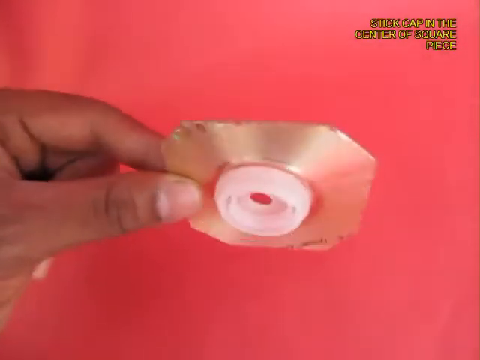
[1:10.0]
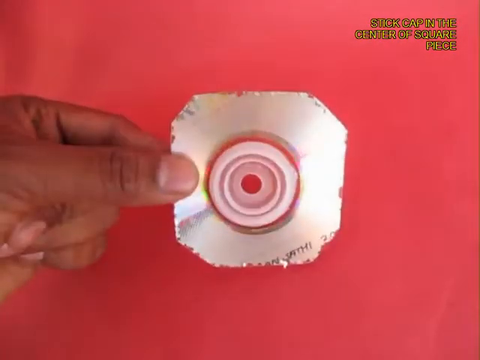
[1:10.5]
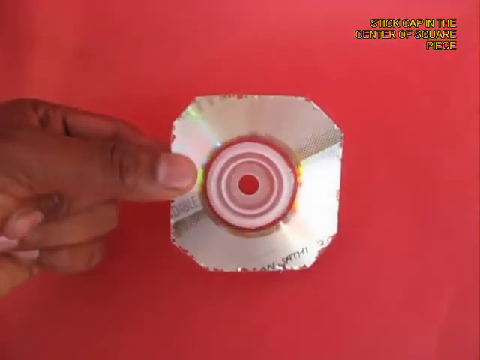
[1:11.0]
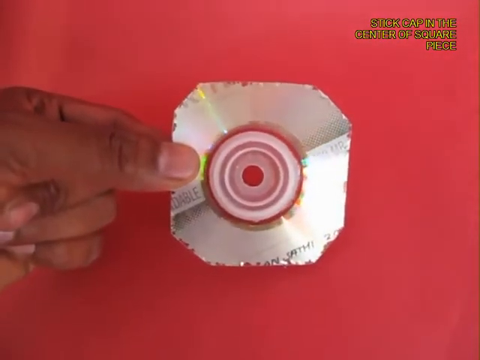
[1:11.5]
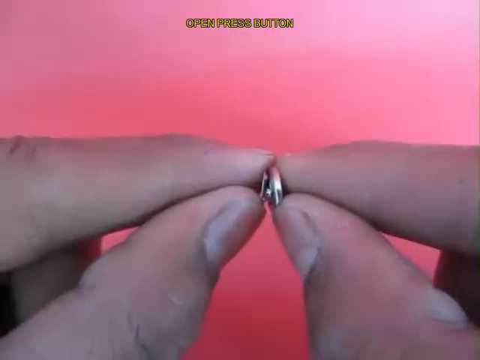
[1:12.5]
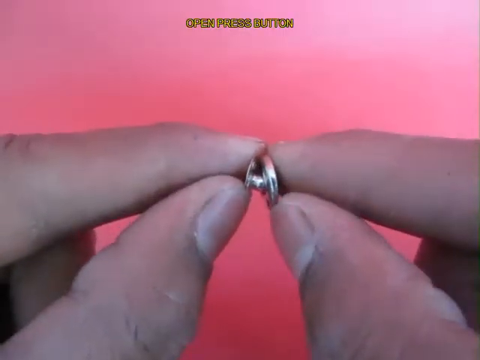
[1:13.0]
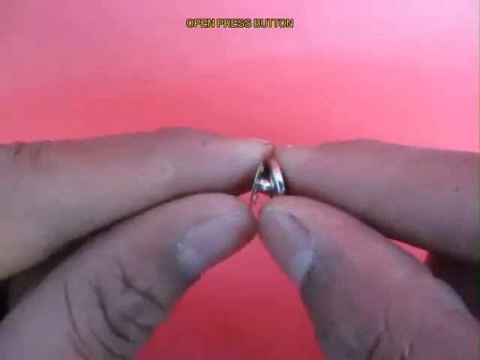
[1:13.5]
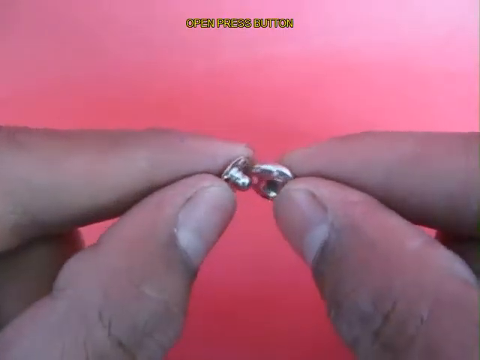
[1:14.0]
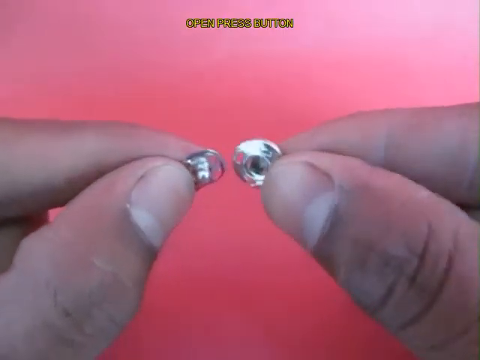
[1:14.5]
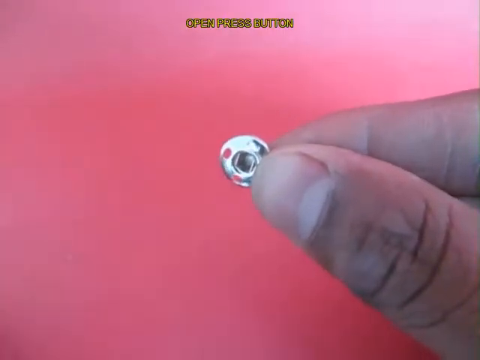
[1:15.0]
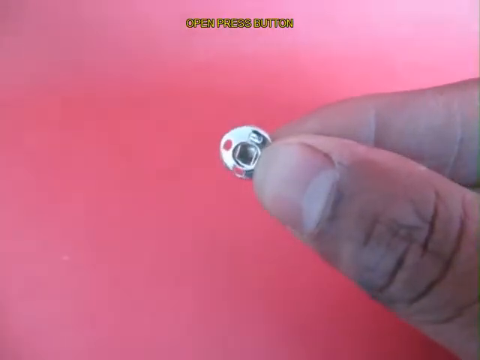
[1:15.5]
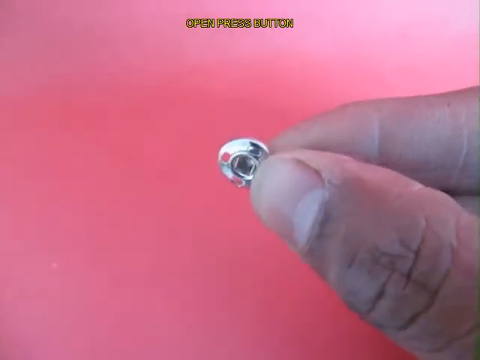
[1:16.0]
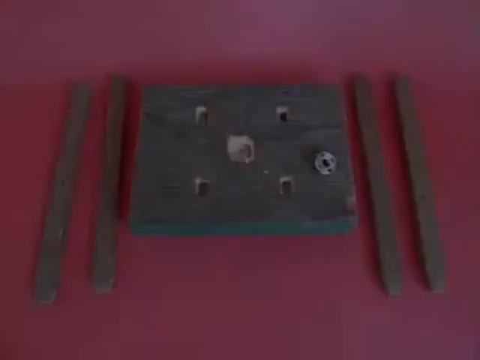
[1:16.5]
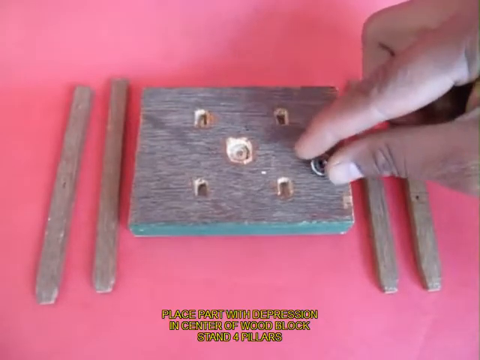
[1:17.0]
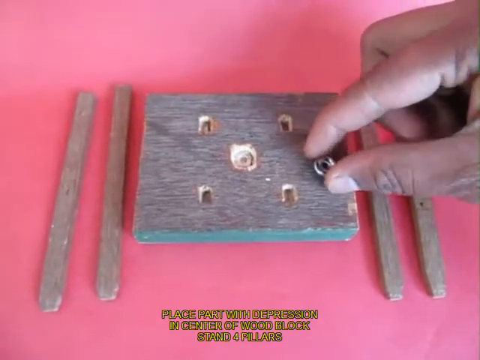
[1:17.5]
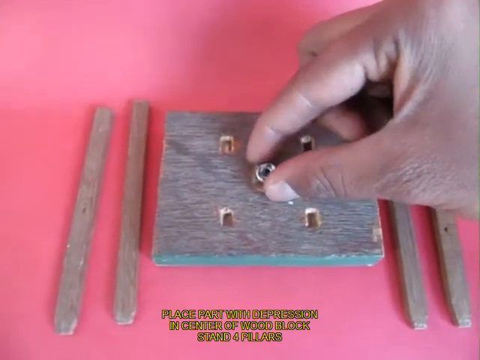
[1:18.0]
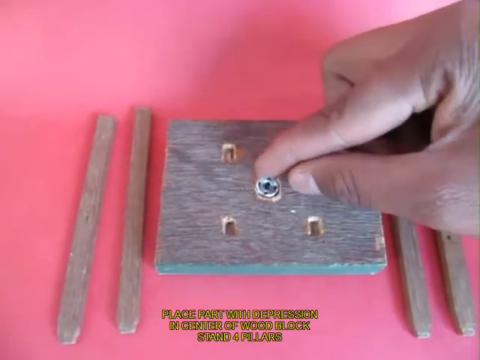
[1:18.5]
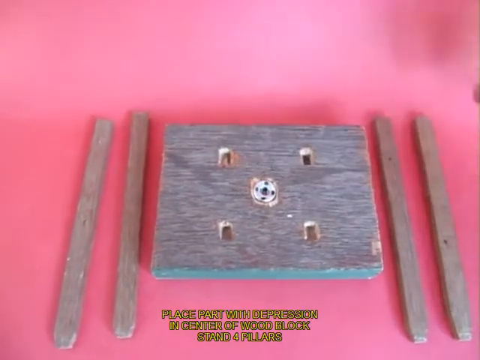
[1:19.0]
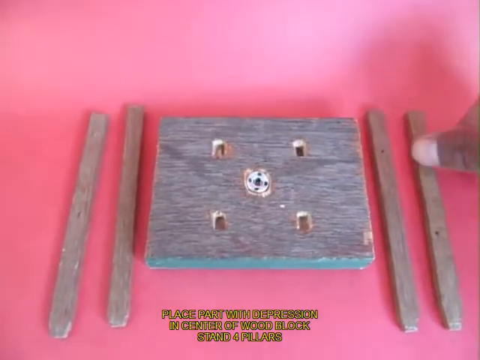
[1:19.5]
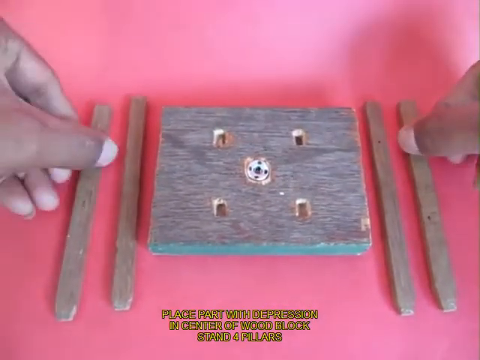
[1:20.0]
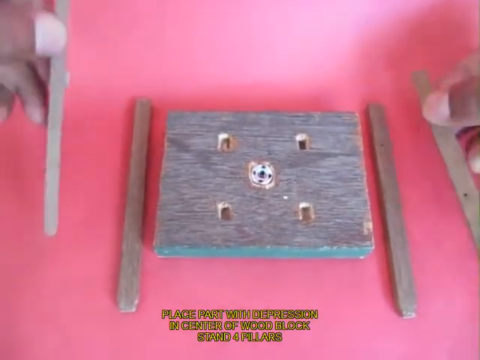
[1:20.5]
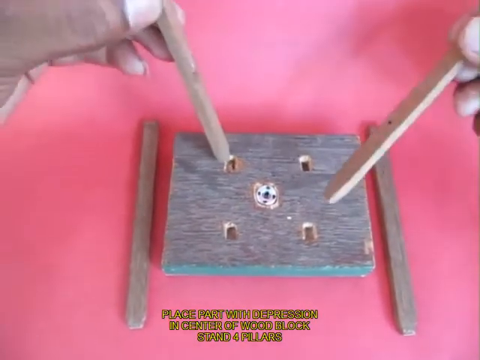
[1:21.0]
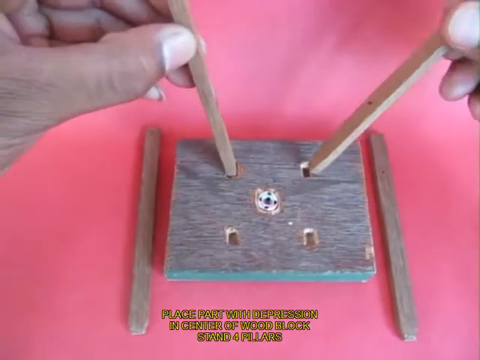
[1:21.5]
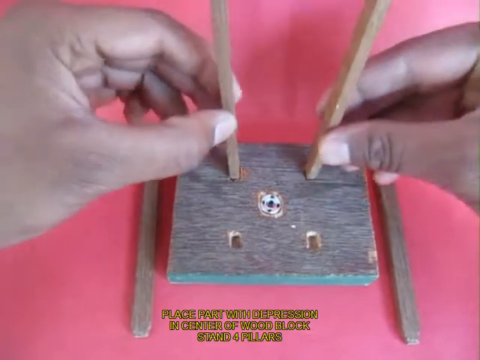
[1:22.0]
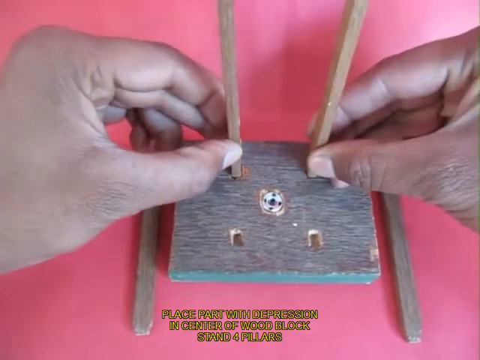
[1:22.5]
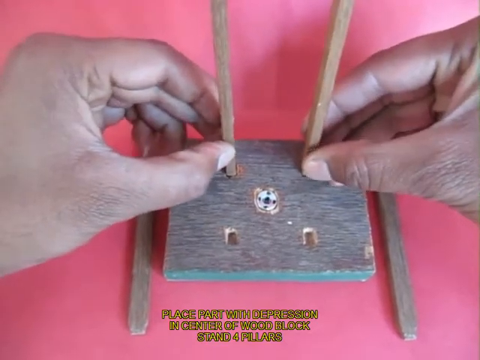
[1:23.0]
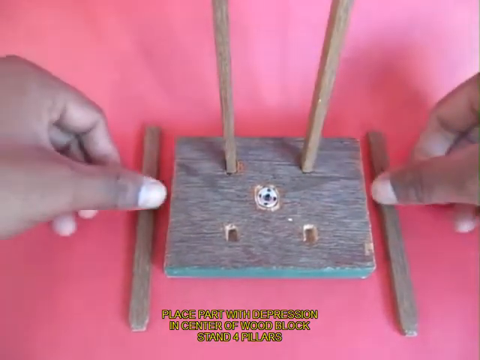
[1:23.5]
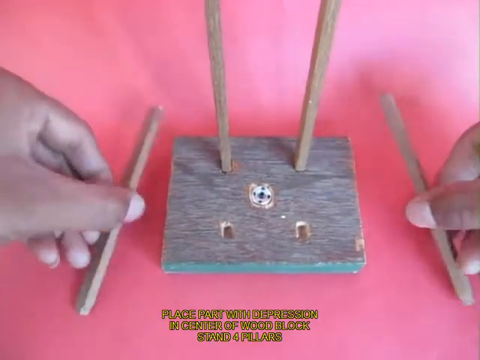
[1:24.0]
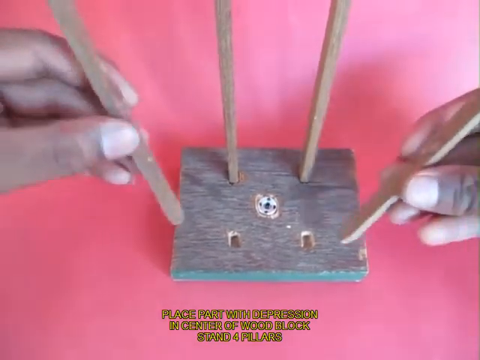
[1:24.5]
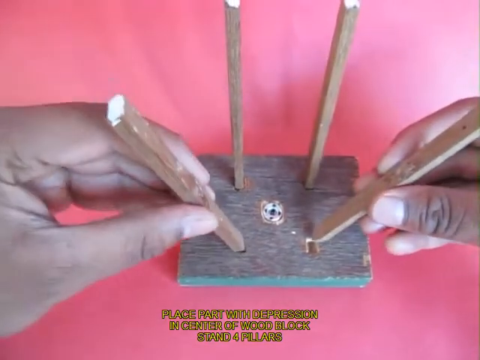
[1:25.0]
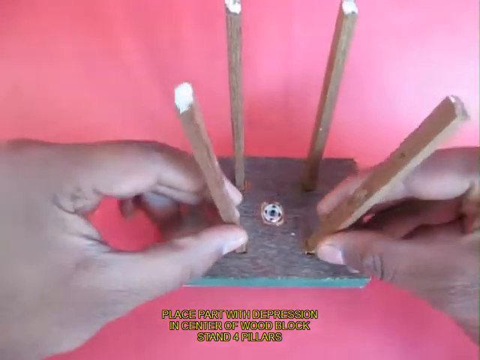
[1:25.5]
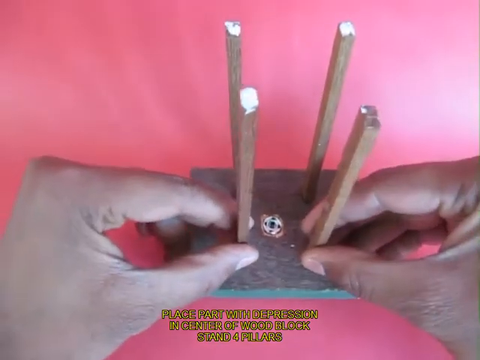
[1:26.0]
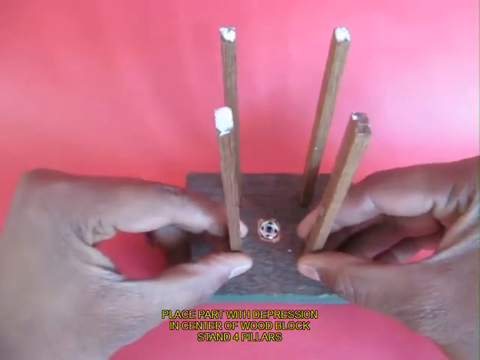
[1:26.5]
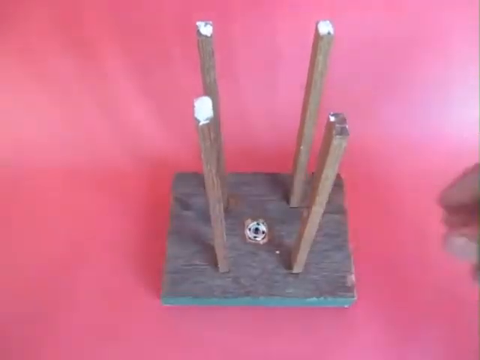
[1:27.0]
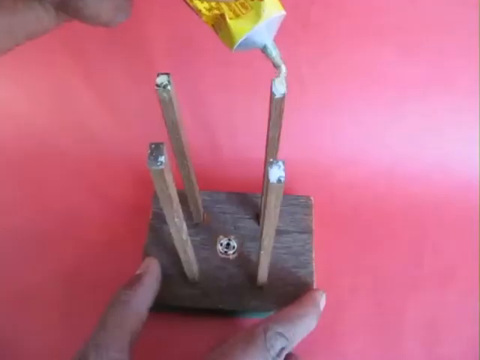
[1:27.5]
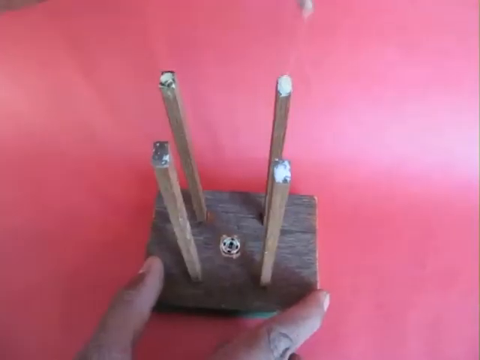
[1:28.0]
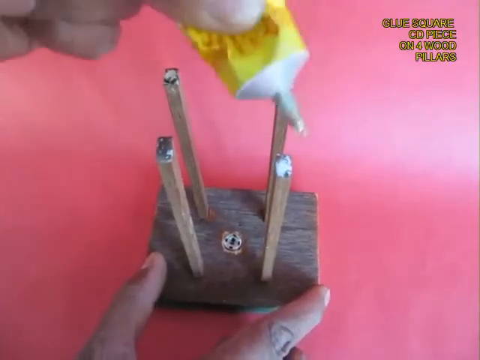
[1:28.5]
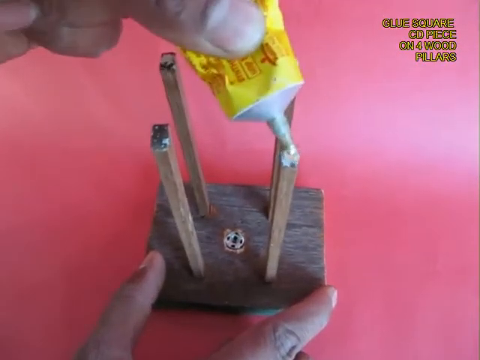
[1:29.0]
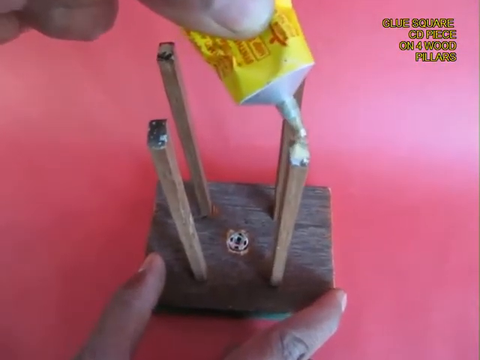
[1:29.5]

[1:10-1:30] The person holds the CD with the left hand, showing its back and front, and ends with it facing the back. In a new shot, the right and left index fingers and thumbs hold a push press button; they separate its front and back, and the right hand then holds the back of the opened press button. Next, with wooden pieces in view, the right hand holds the press button on top of a wooden piece and then puts it in the middle. They put small wooden sticks on the wooden board, then apply rubber glue to each of the four square pieces set along the wooden box, on all four legs, starting from the top right corner.